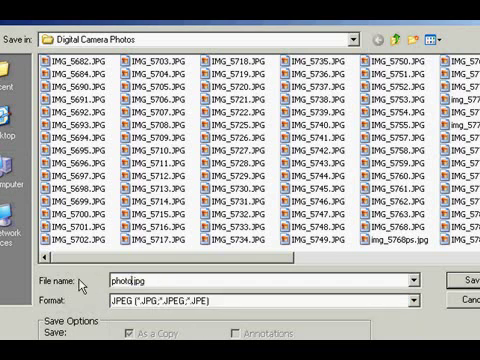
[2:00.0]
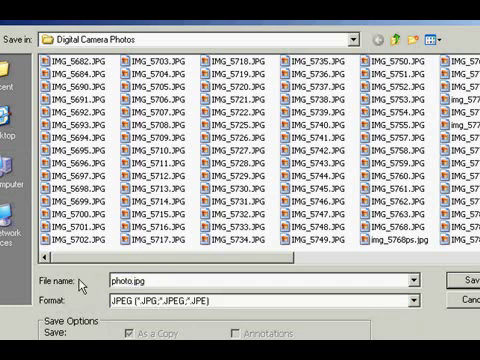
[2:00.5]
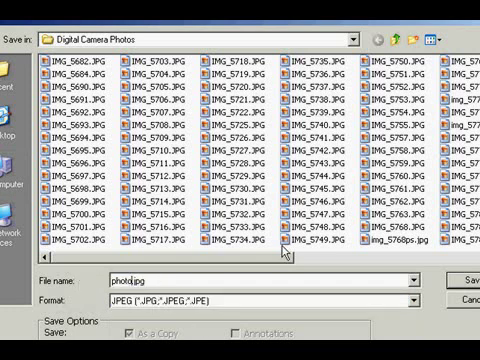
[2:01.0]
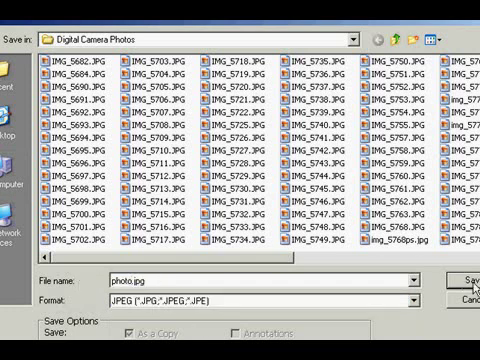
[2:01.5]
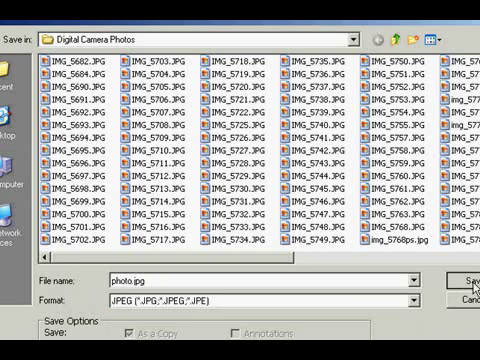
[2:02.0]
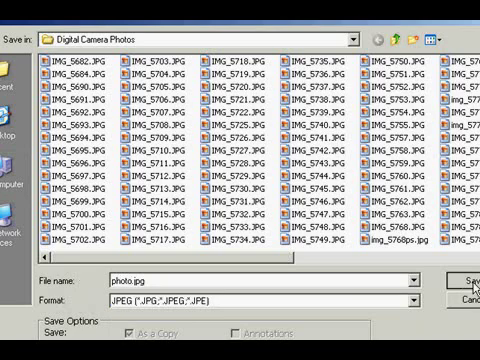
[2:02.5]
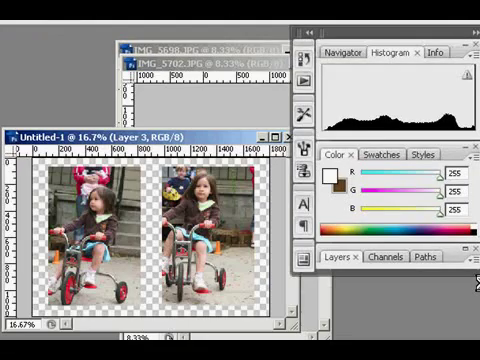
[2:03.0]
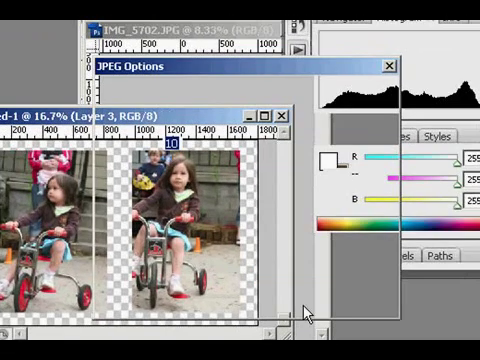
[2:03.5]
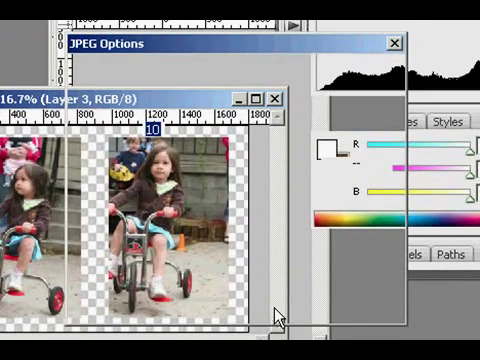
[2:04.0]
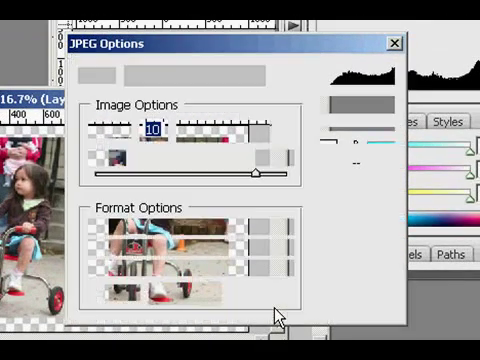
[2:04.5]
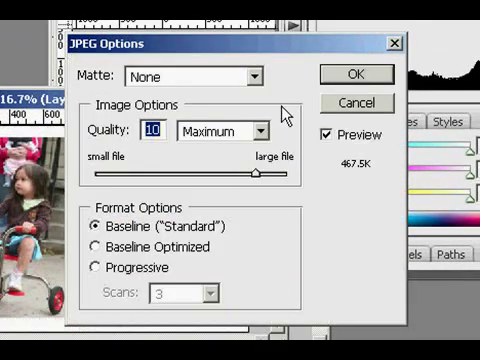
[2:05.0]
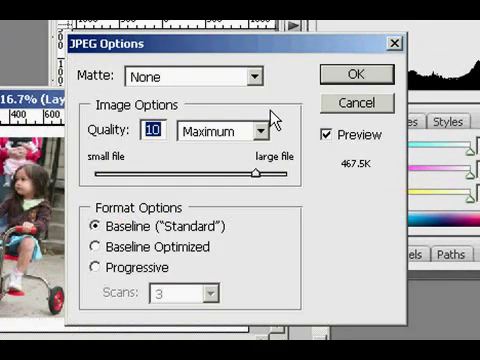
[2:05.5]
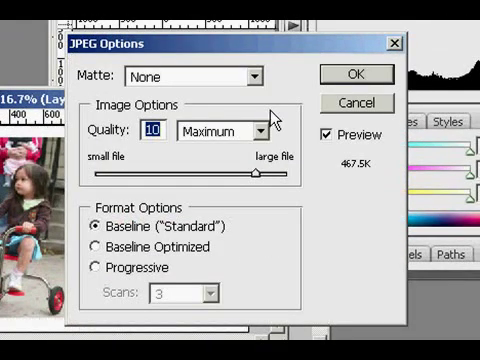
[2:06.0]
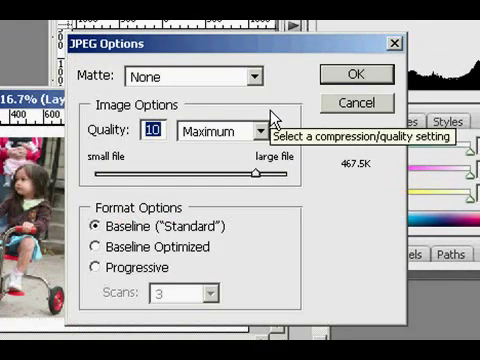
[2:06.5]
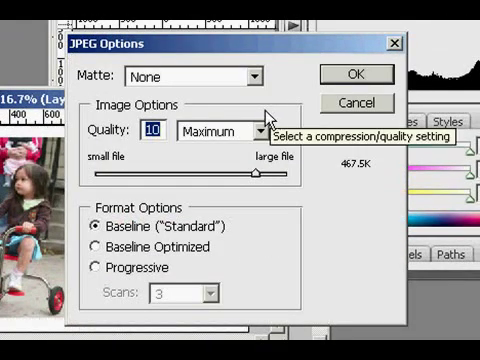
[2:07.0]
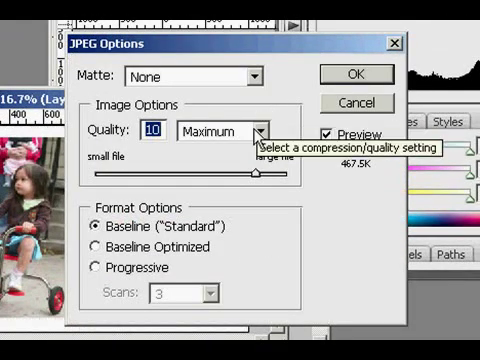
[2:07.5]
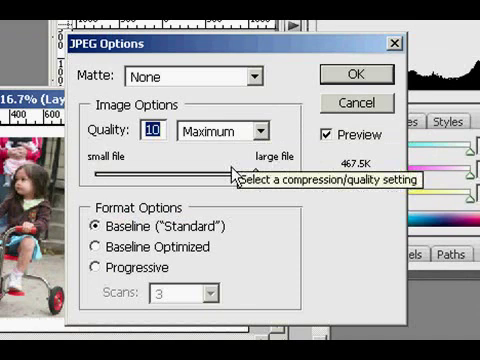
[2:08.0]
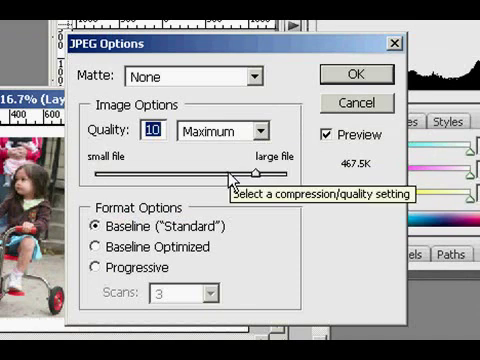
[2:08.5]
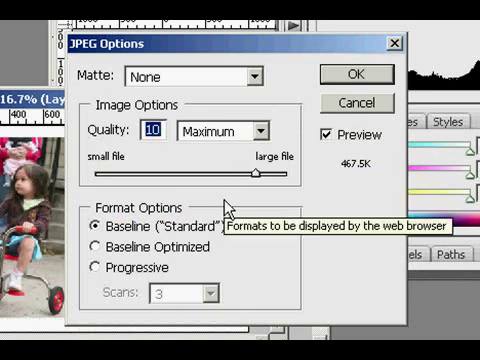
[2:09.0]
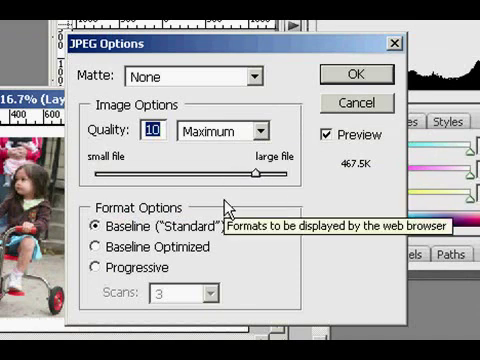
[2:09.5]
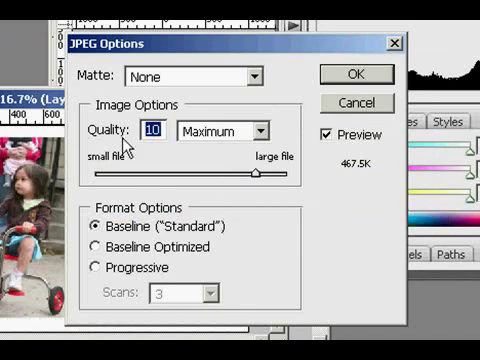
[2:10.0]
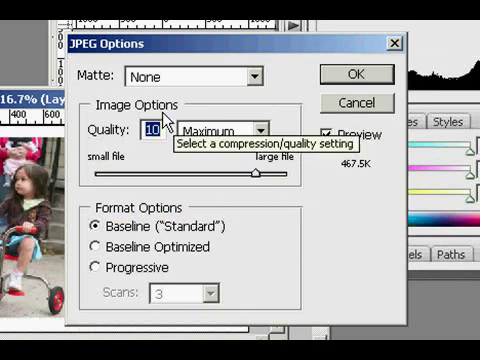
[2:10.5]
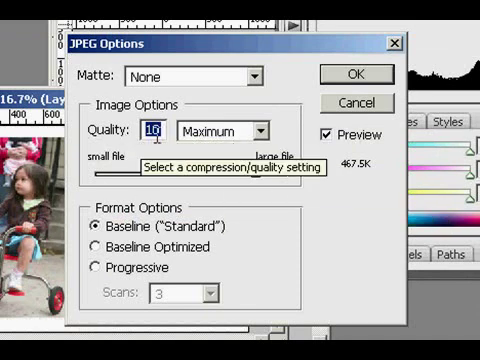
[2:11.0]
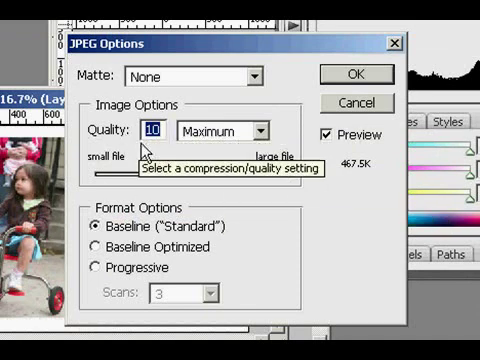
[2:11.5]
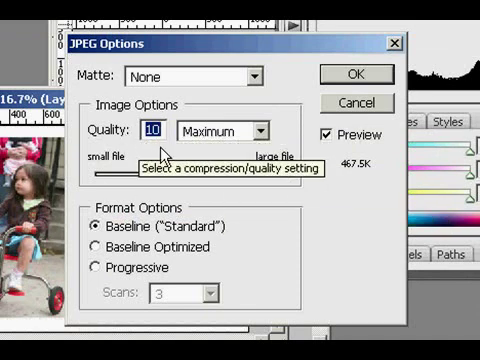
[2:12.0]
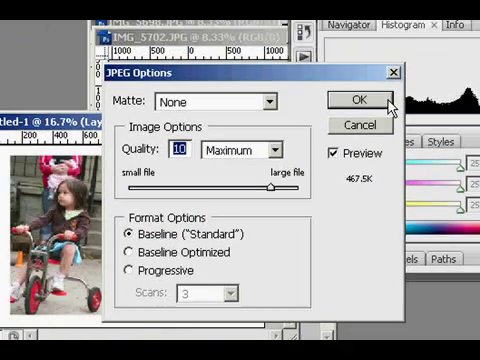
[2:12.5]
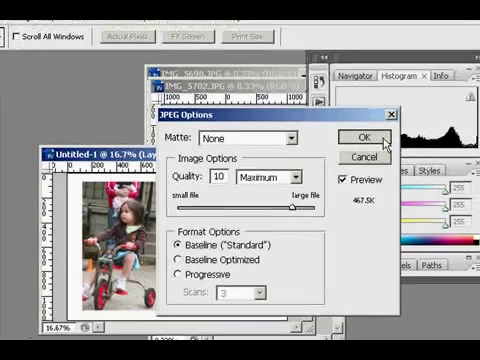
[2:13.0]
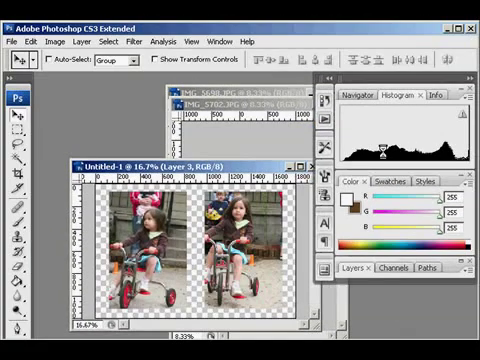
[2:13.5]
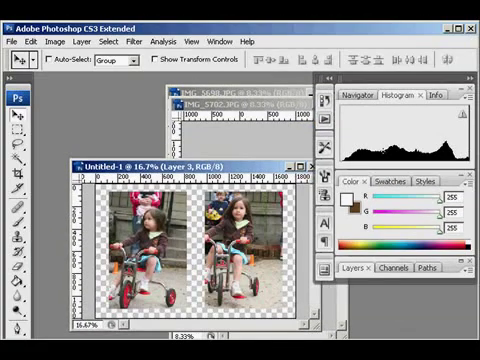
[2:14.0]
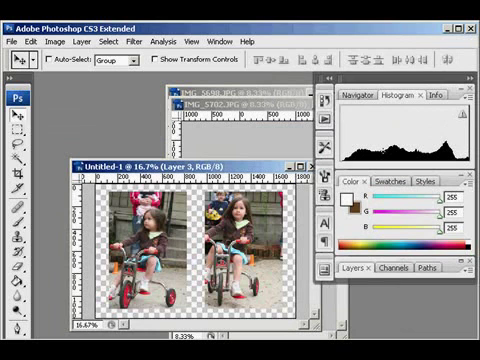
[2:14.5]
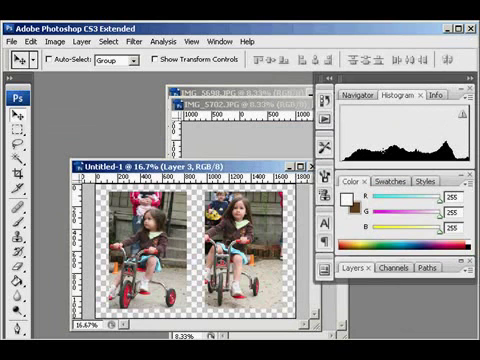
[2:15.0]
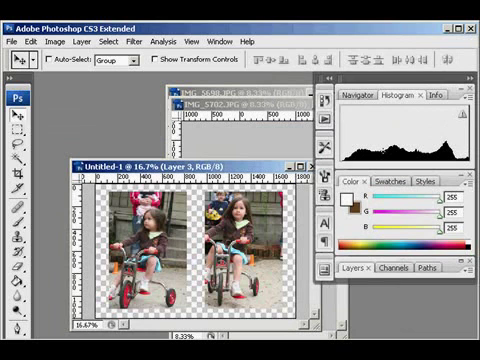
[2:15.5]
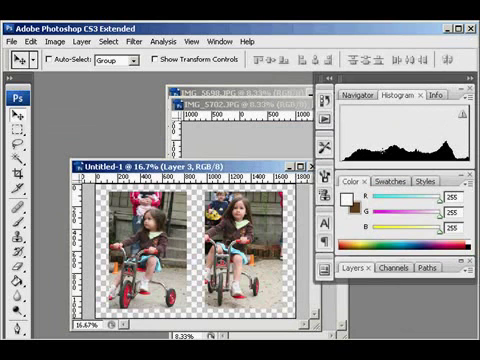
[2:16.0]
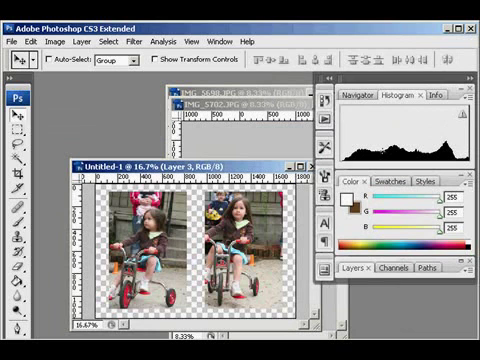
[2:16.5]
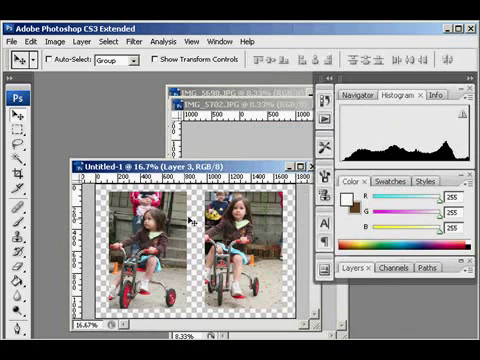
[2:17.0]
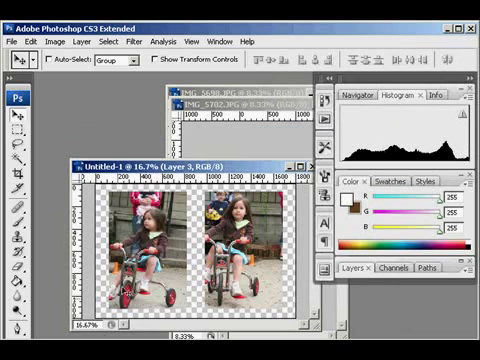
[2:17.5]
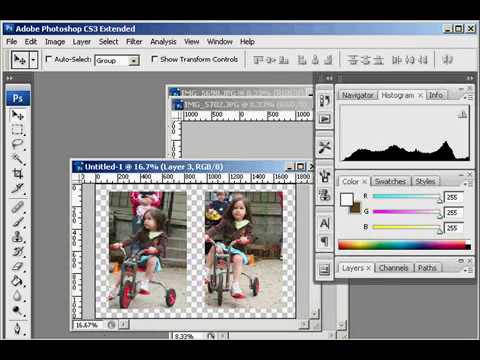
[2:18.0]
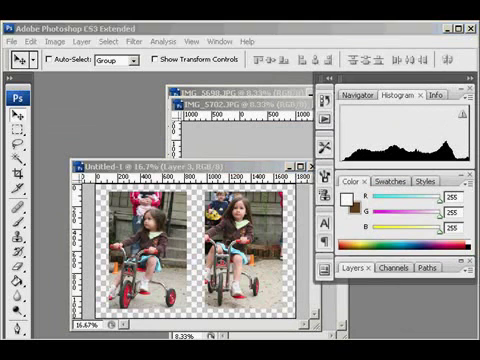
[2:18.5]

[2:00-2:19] A large array of photo files appears, numbering in the hundreds. The untitled new document is saved in the folder digital camera photos as a JPEG file under the name photo. The JPEG options screen in Photoshop then appears, offering a quality setting that controls compression; quality is set at 10, the maximum, which means a large file size. This ends the Photoshop demonstration.